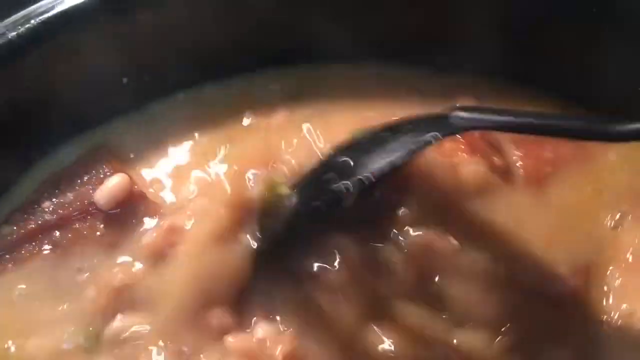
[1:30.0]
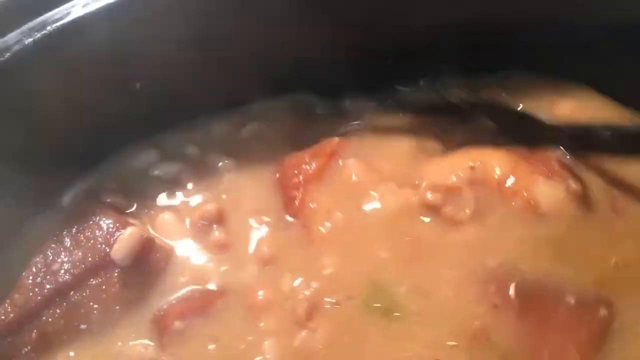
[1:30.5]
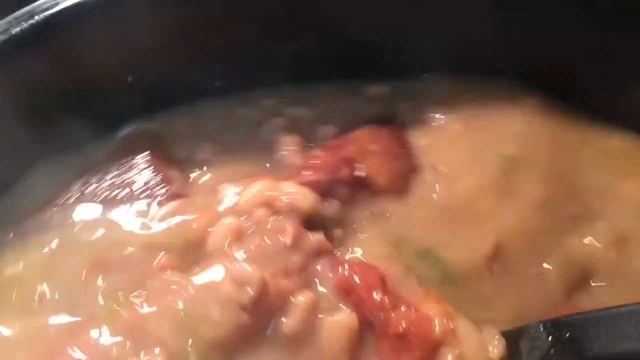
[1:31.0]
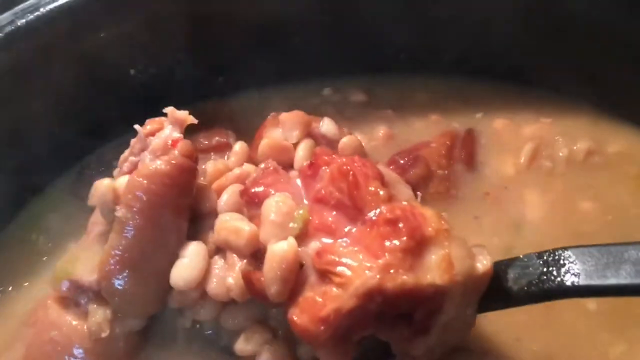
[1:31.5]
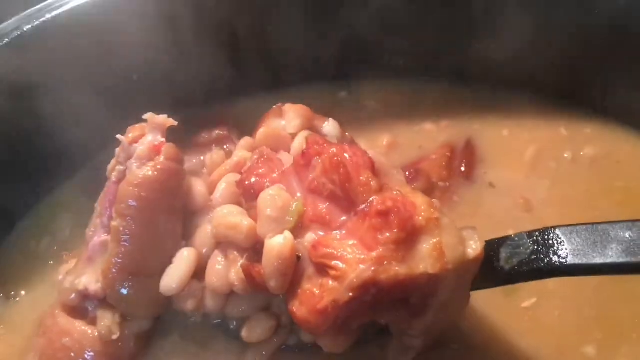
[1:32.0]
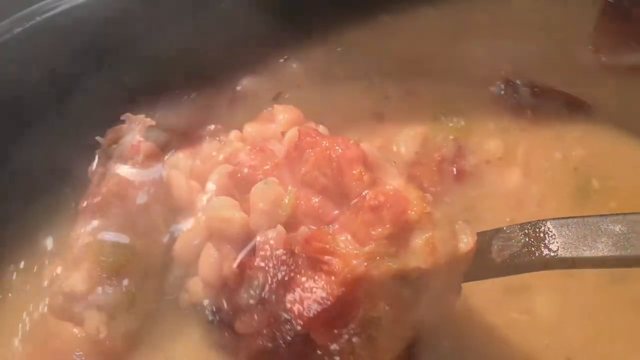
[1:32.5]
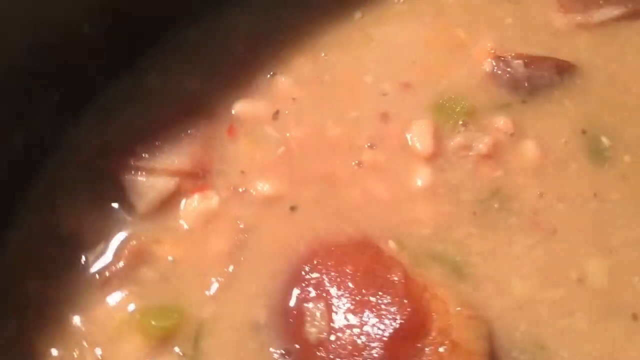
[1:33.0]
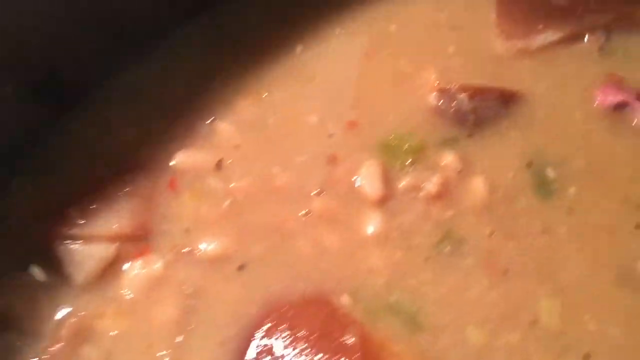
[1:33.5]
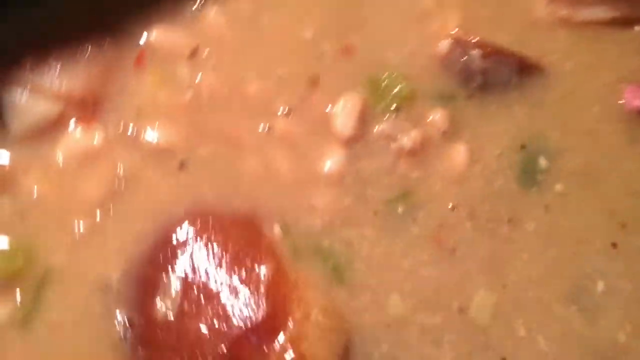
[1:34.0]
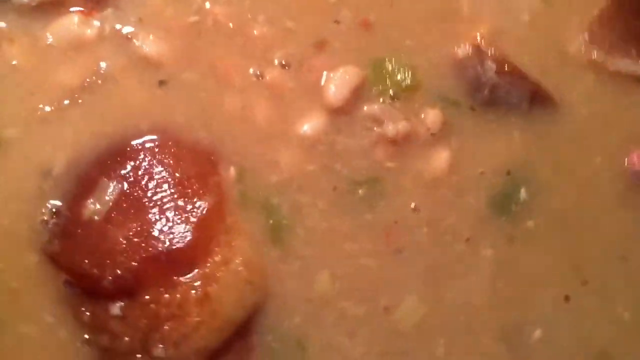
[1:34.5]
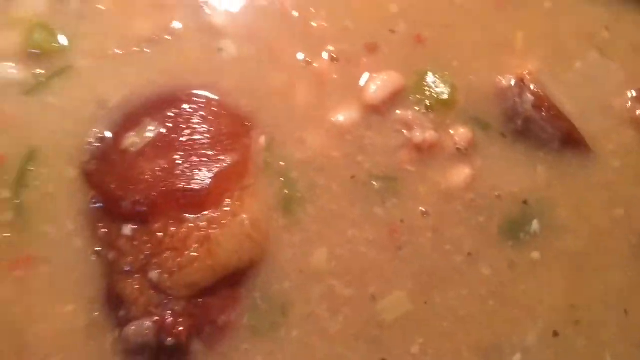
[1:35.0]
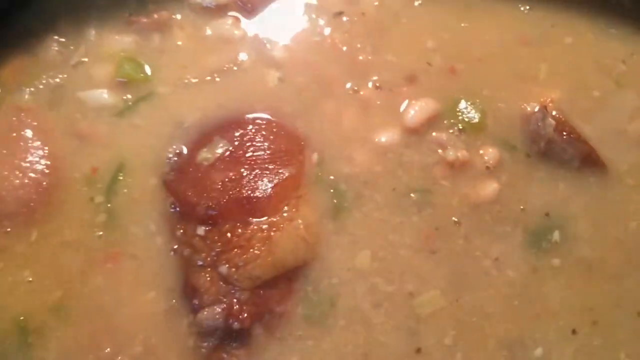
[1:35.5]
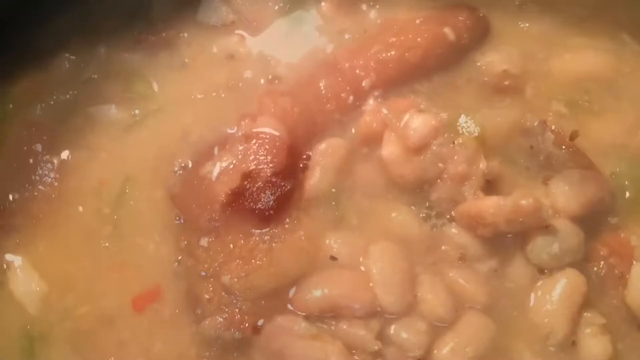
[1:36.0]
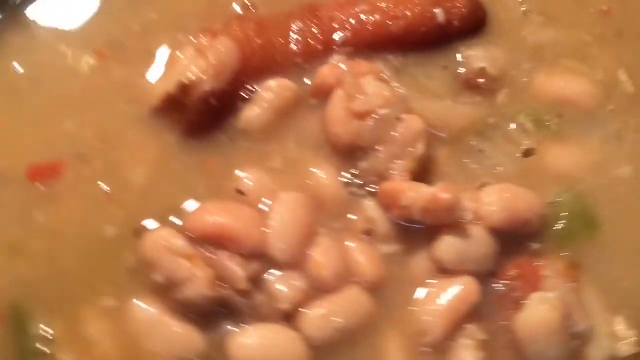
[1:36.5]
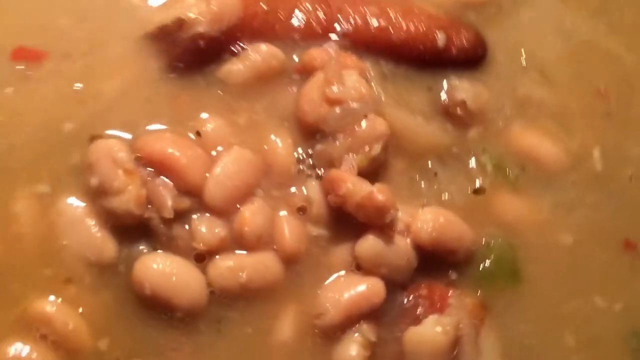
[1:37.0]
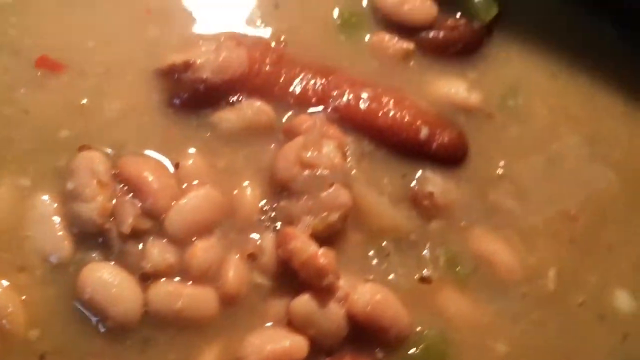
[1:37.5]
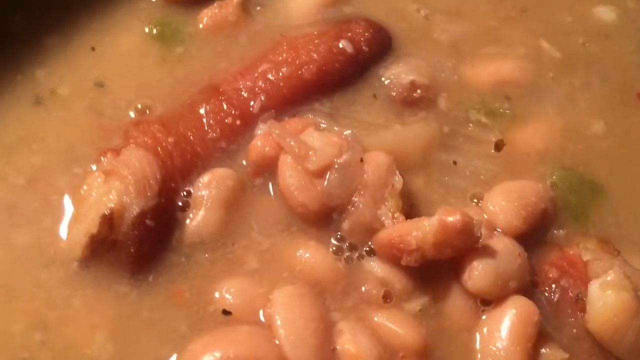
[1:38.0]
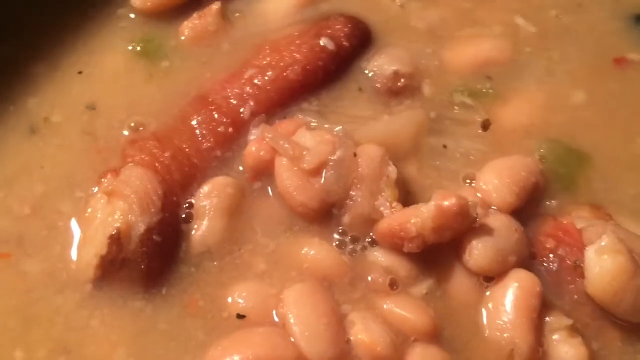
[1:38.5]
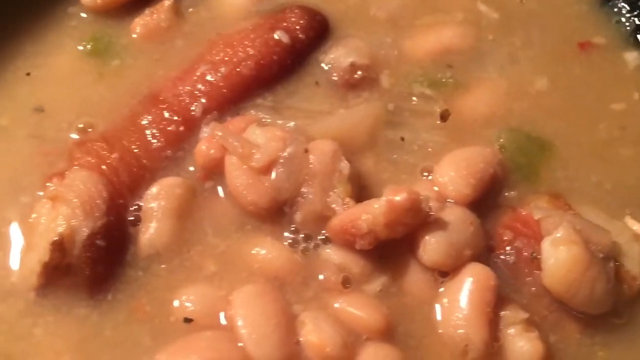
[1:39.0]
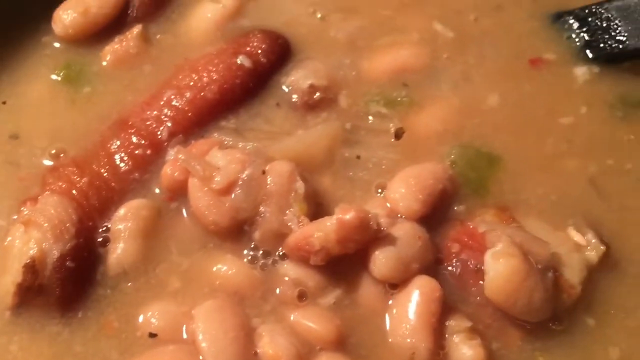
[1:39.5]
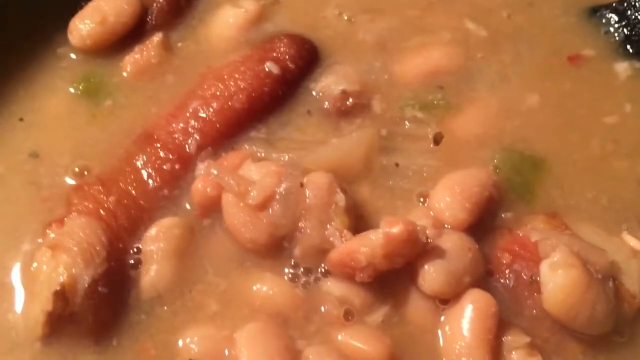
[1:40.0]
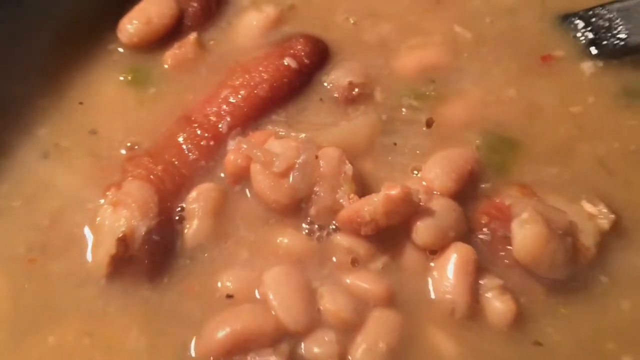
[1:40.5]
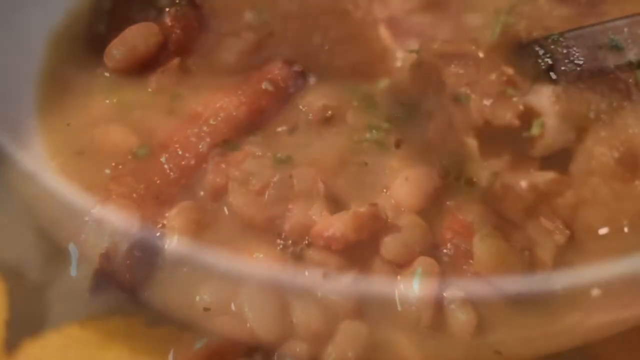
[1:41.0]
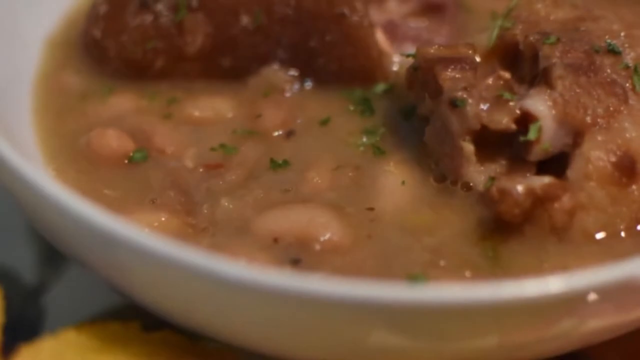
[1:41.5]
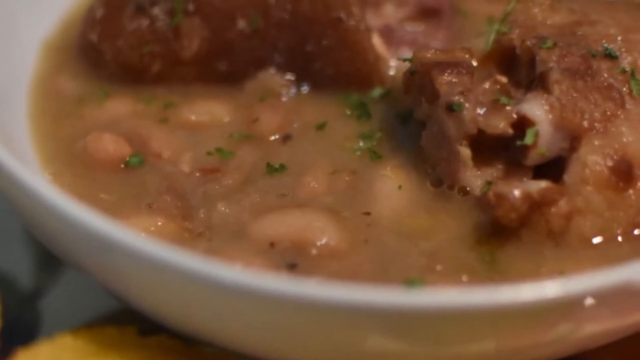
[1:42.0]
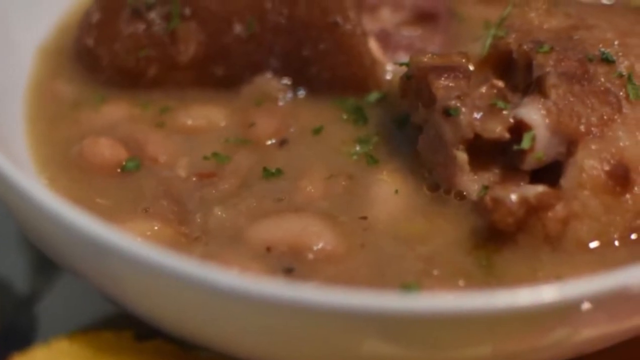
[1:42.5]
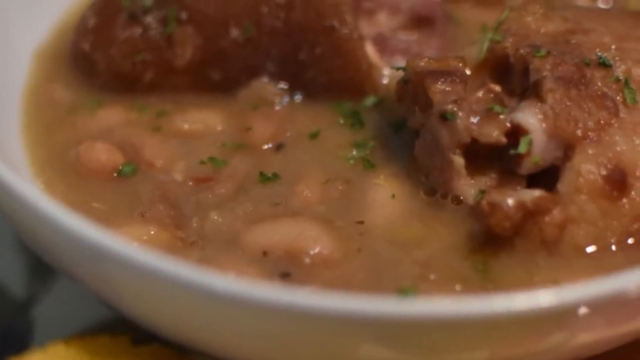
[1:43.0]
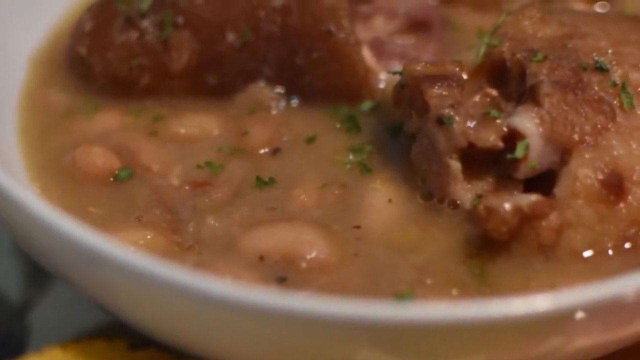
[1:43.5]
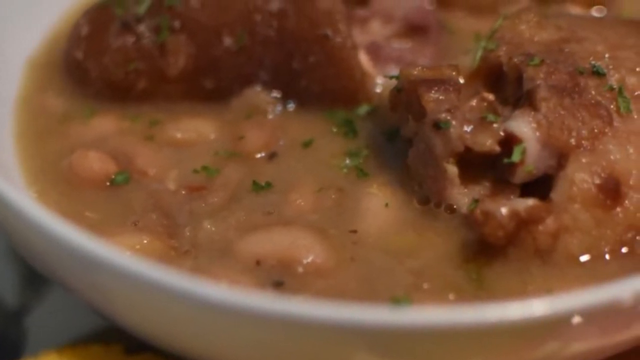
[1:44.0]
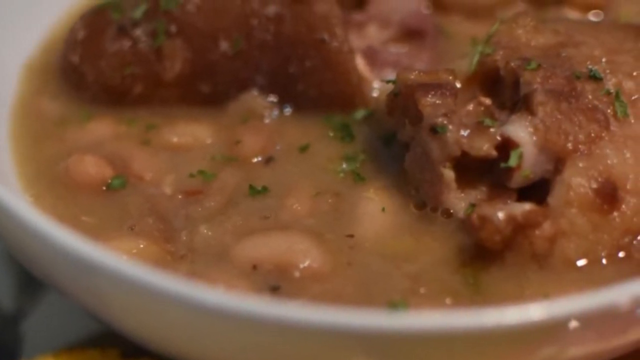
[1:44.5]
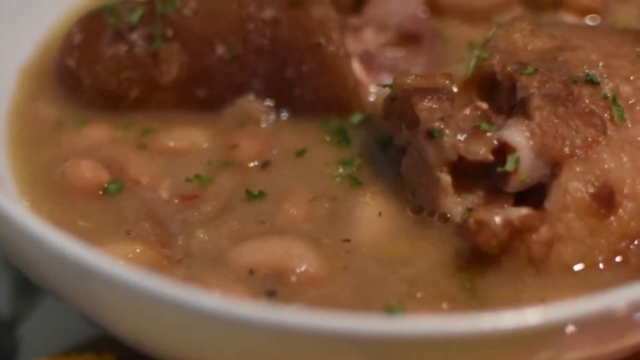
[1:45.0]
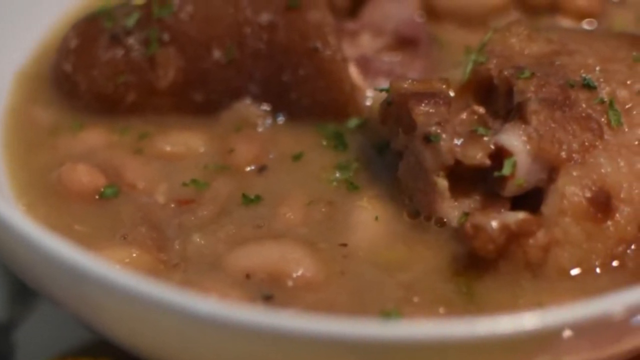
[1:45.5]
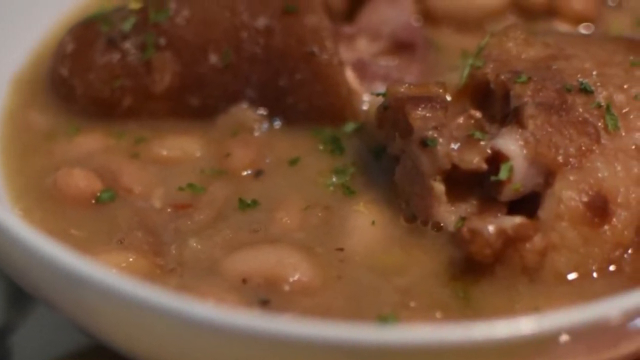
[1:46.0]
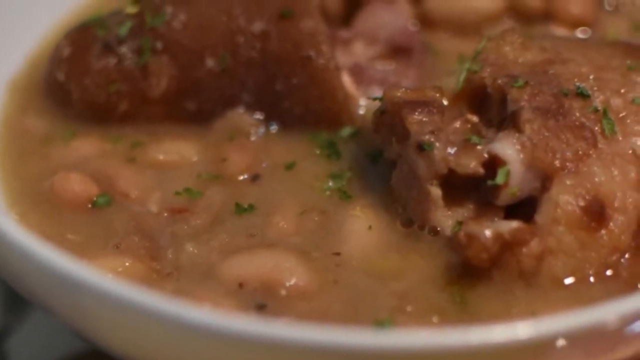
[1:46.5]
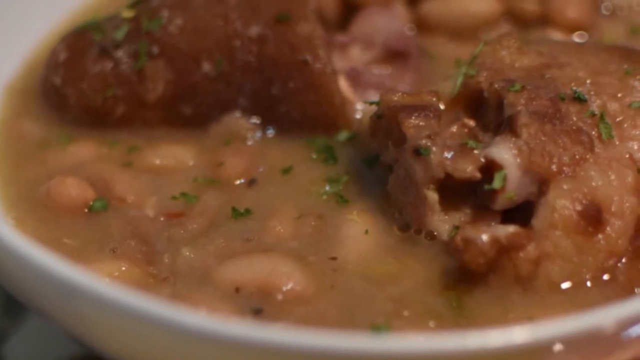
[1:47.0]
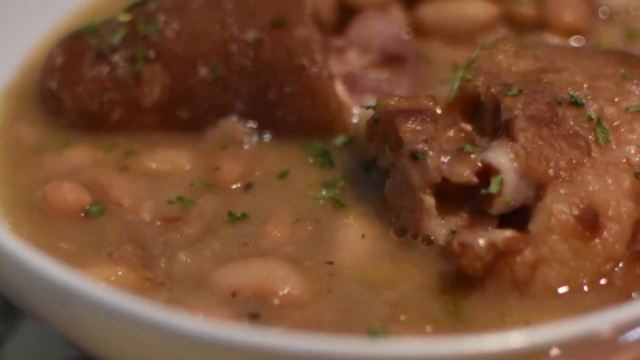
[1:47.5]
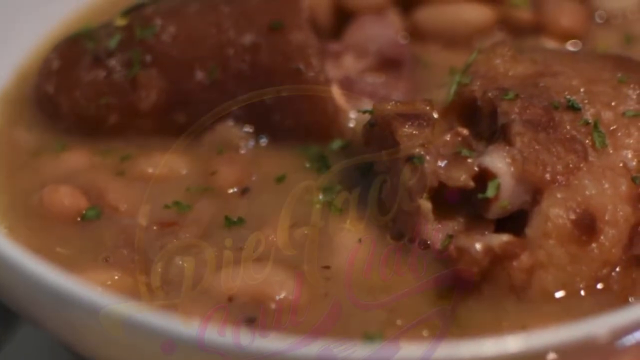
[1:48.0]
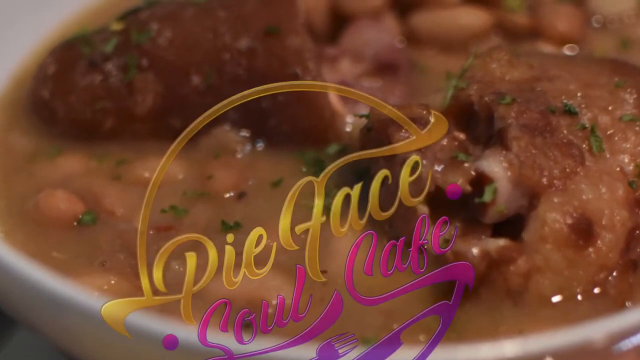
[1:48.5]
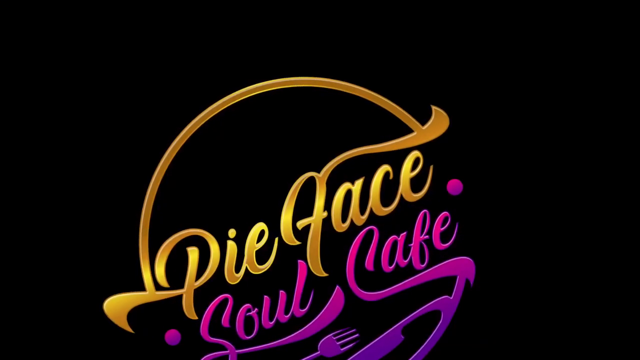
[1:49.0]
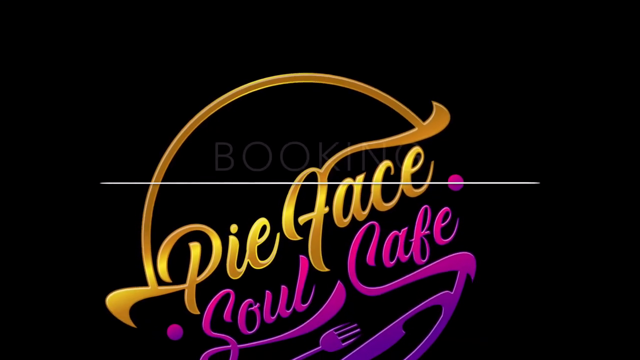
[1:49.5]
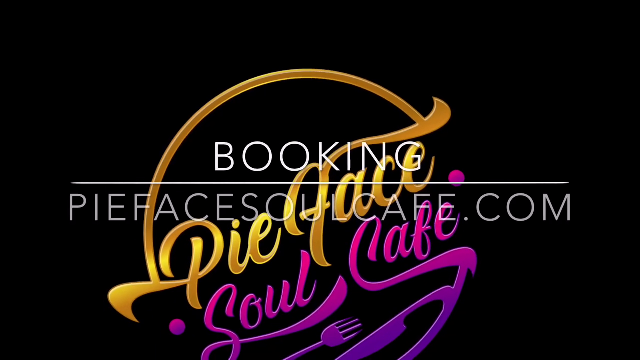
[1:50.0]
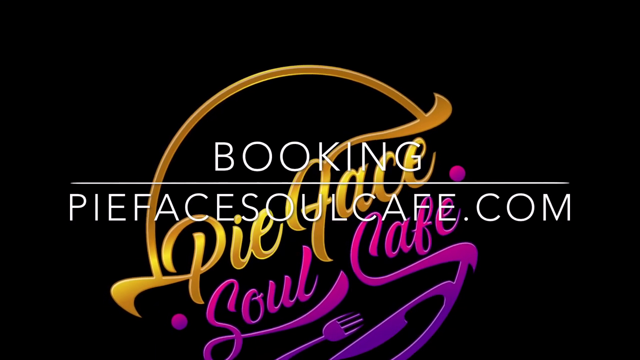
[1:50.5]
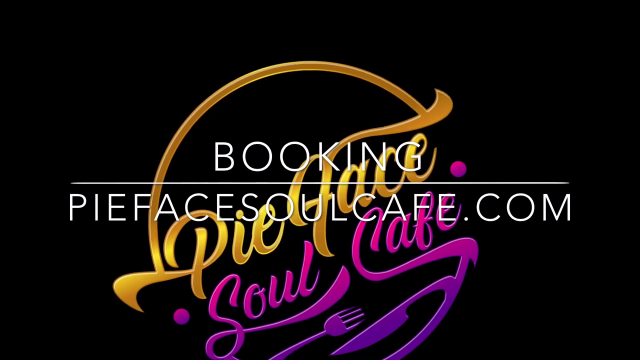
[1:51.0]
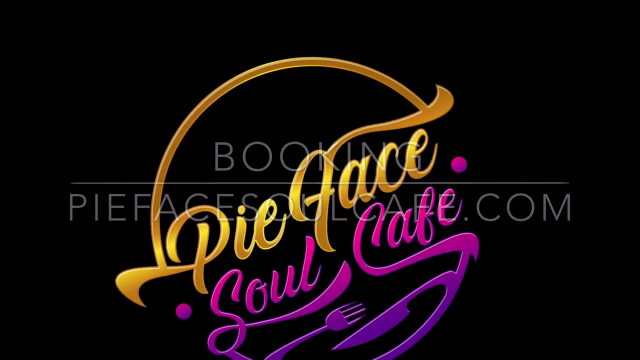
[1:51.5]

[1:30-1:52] The cooked result is poured into a bowl. On screen, "pie face" is written in yellow and "pie face soul coffee" is written in purple, the name of the kitchen. The meat is tender with a pinkish color, the beans are very soft, and the broth has thickened to a thick consistency.